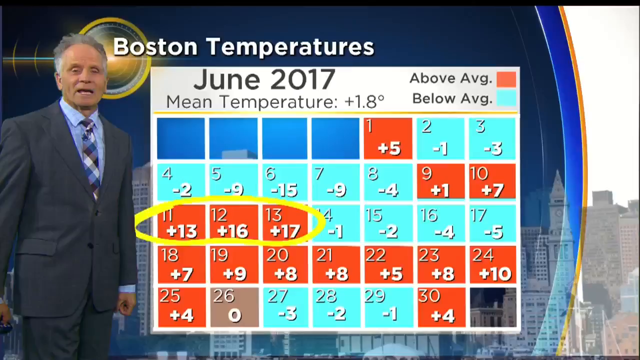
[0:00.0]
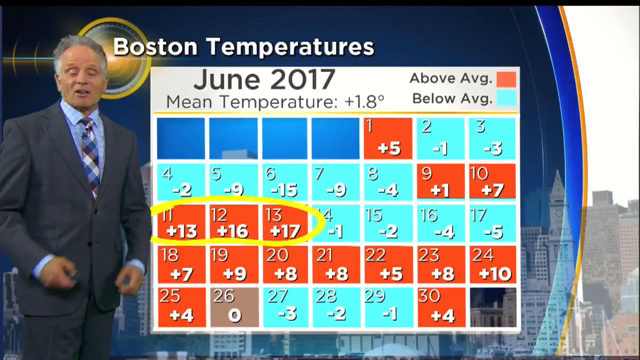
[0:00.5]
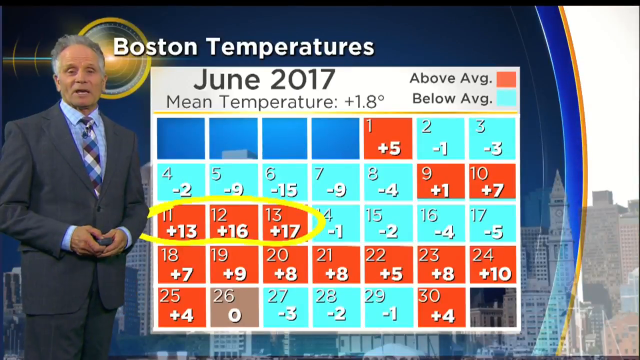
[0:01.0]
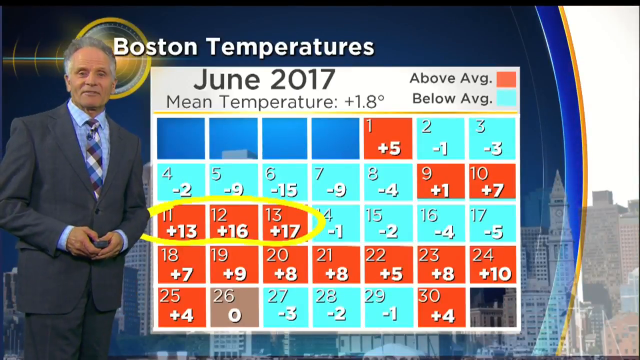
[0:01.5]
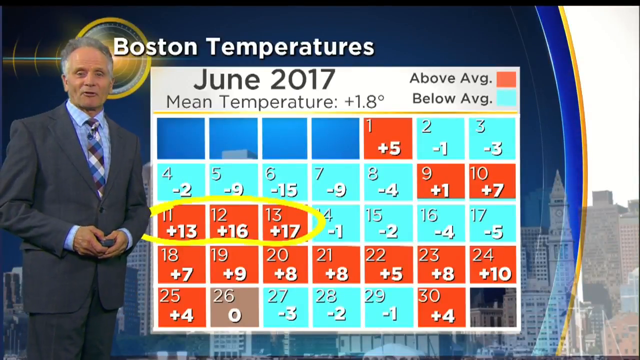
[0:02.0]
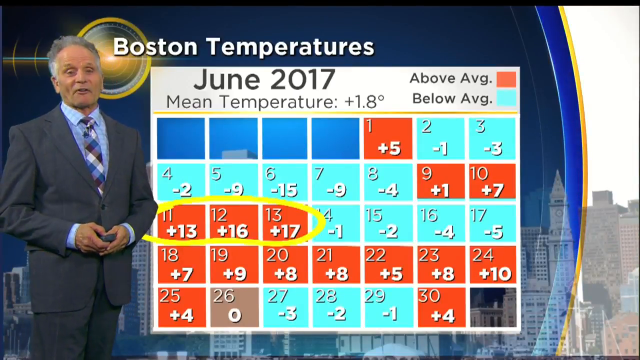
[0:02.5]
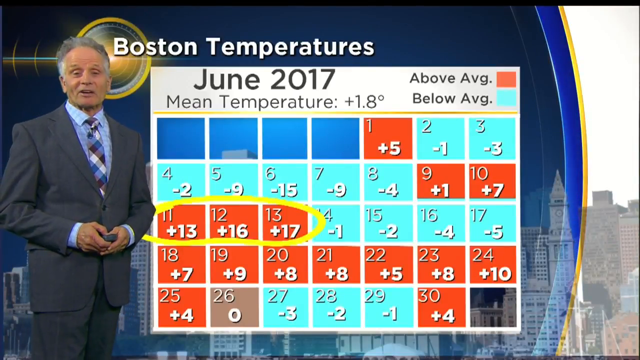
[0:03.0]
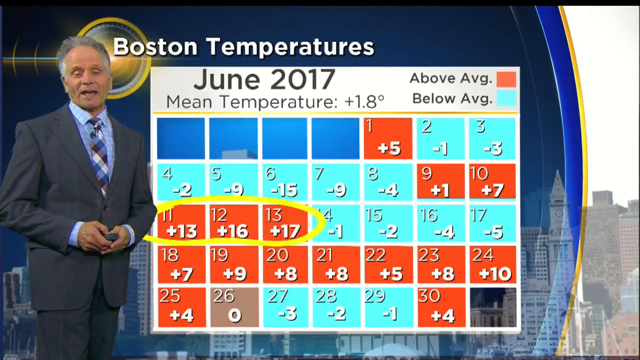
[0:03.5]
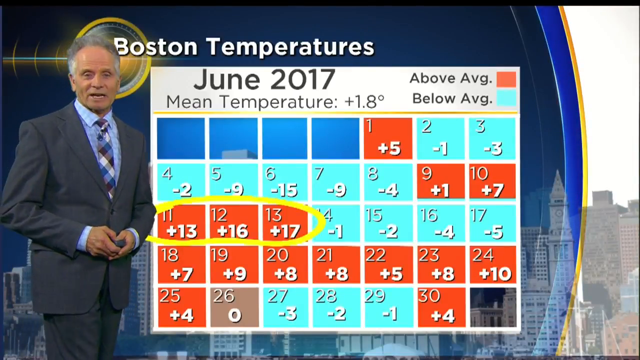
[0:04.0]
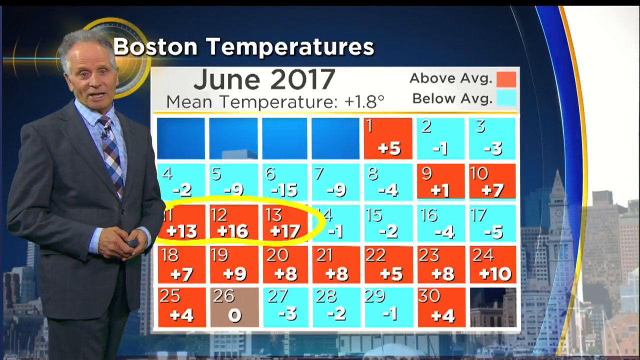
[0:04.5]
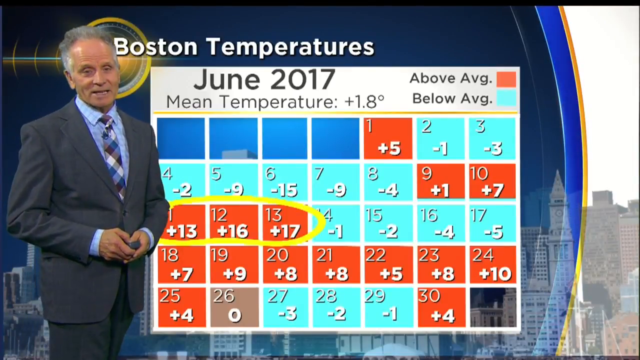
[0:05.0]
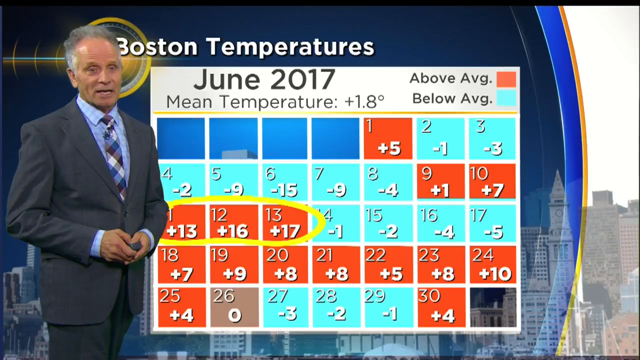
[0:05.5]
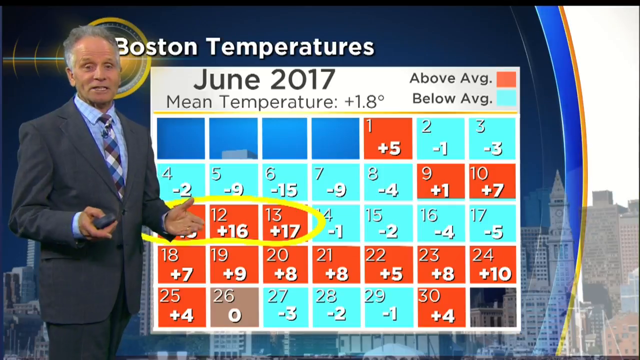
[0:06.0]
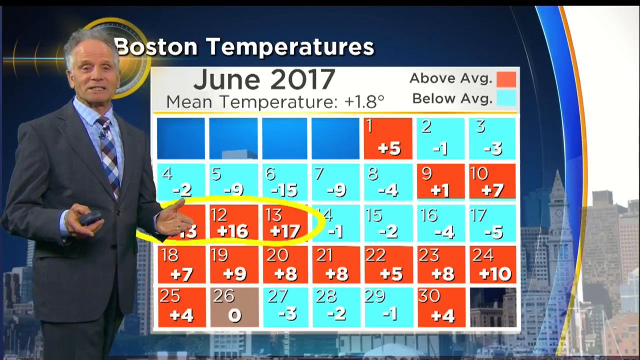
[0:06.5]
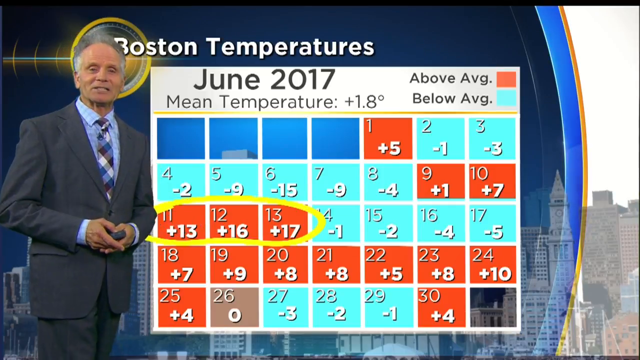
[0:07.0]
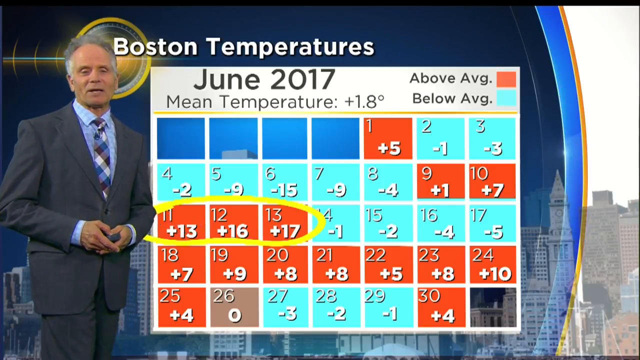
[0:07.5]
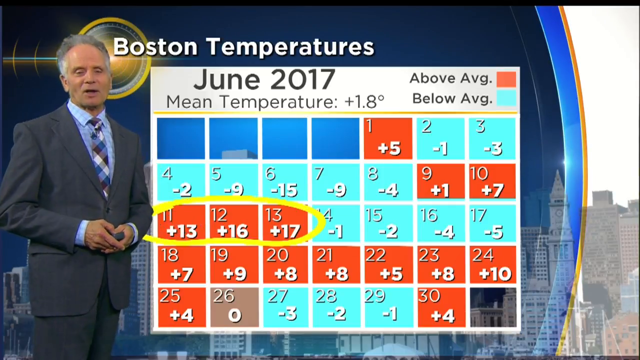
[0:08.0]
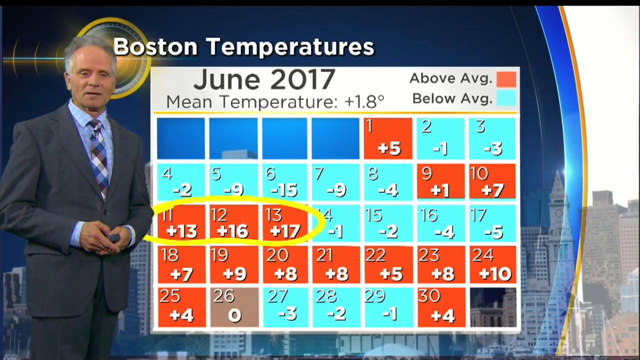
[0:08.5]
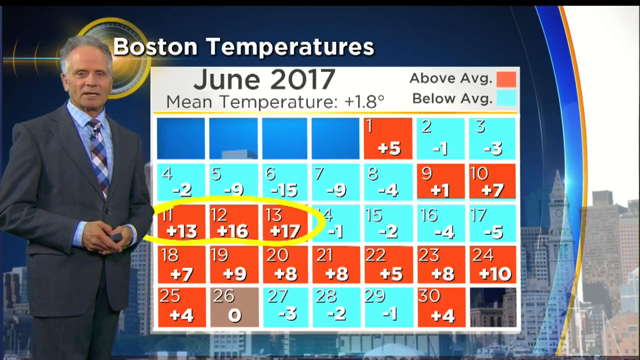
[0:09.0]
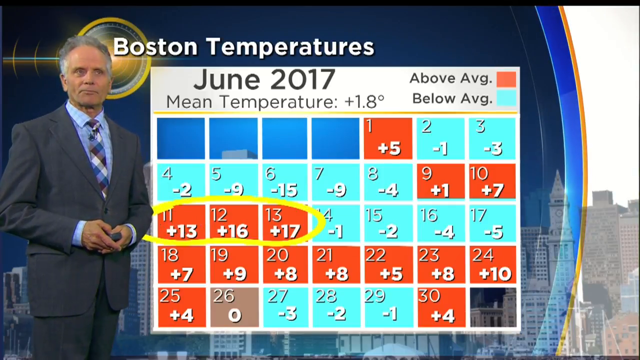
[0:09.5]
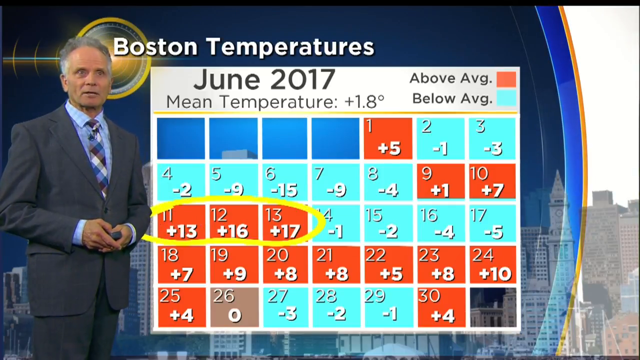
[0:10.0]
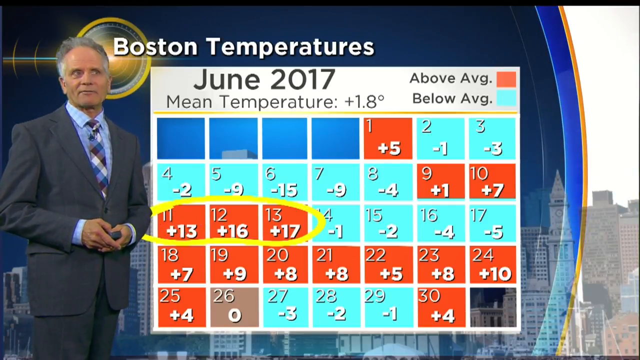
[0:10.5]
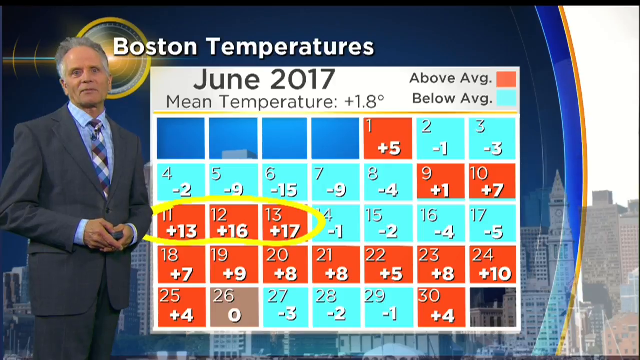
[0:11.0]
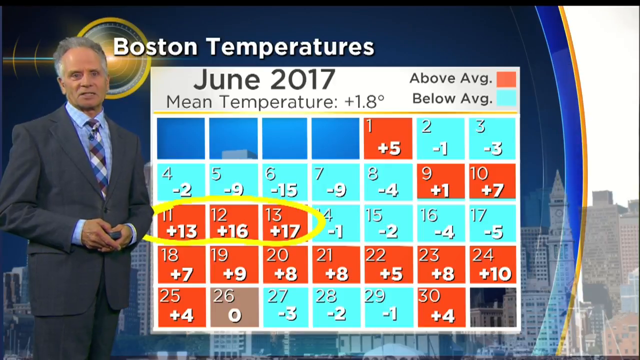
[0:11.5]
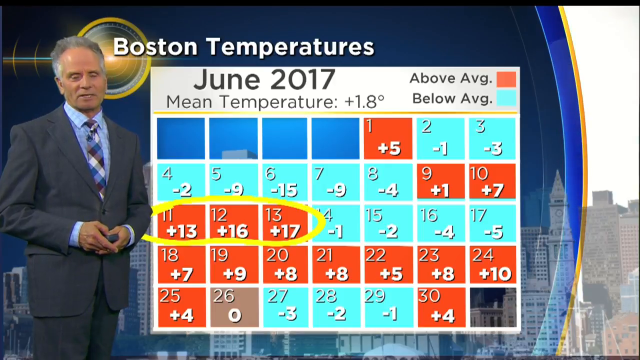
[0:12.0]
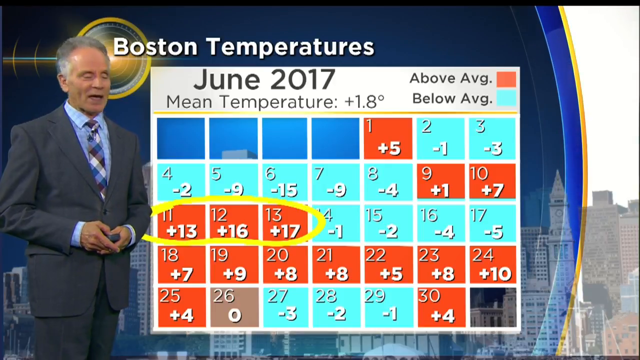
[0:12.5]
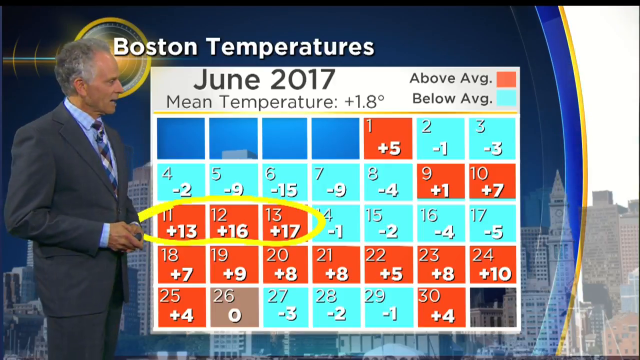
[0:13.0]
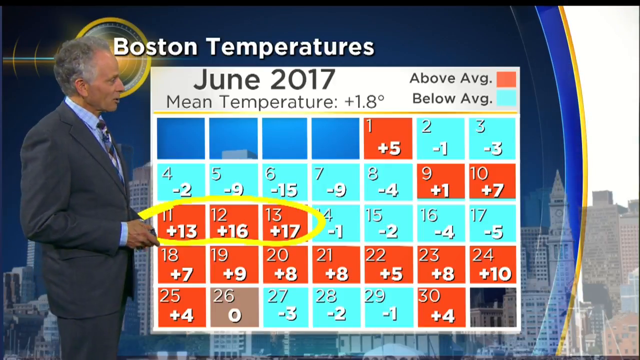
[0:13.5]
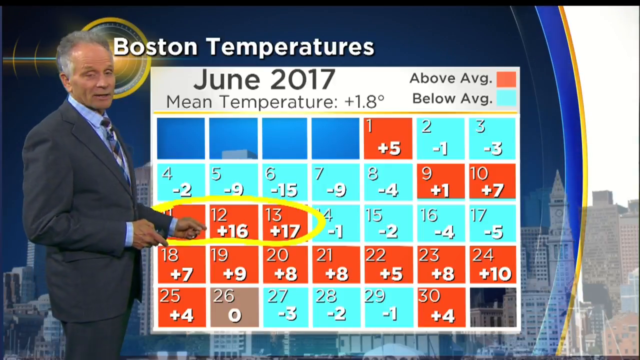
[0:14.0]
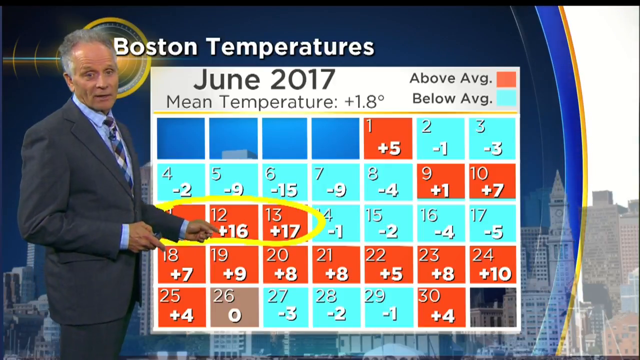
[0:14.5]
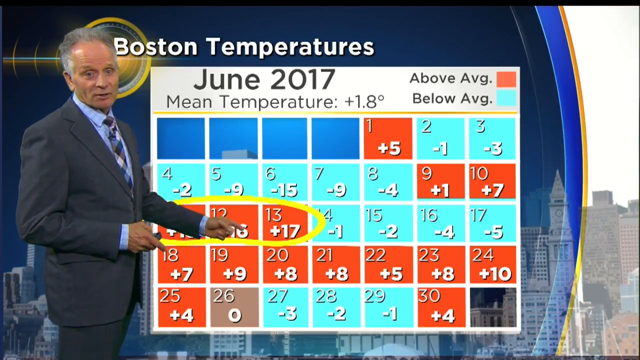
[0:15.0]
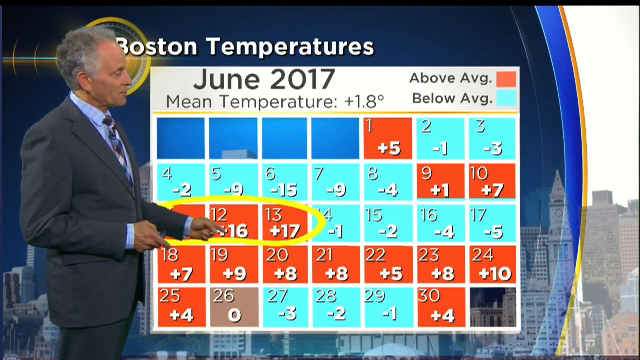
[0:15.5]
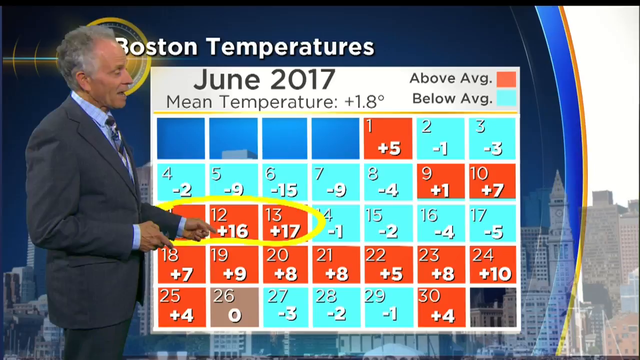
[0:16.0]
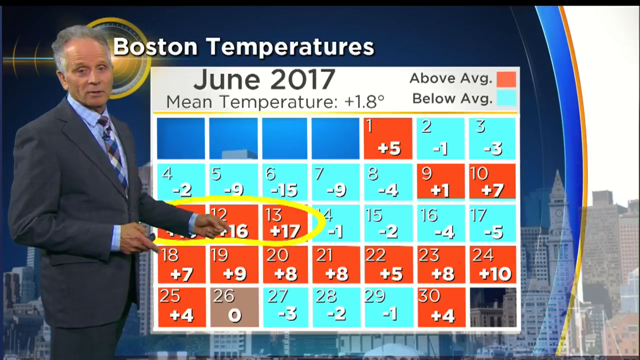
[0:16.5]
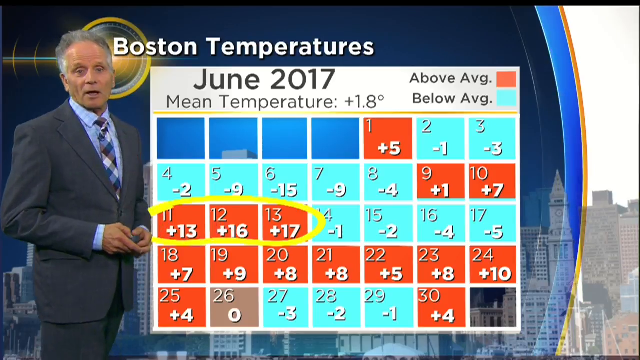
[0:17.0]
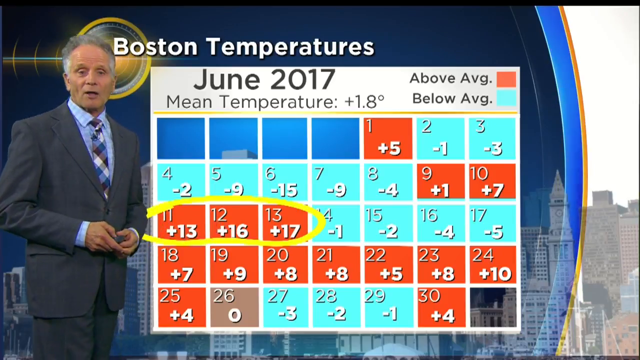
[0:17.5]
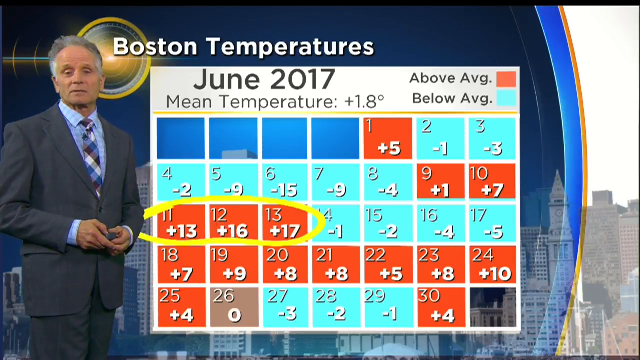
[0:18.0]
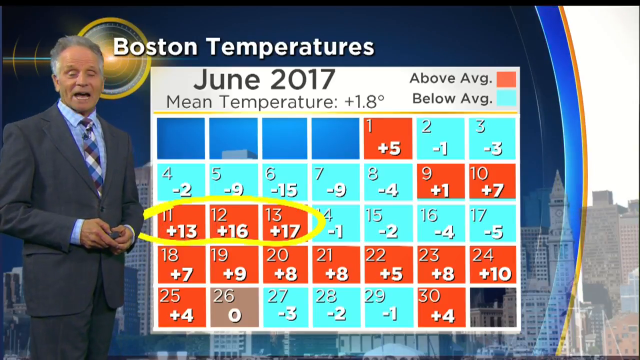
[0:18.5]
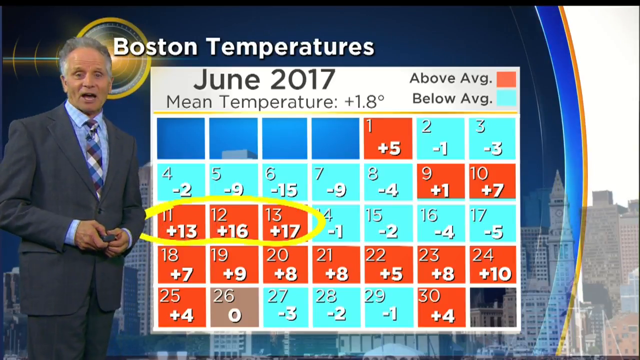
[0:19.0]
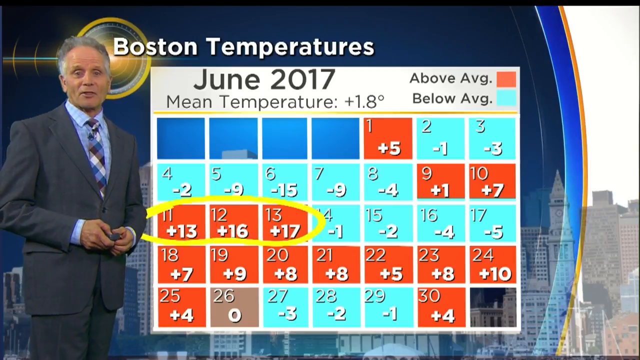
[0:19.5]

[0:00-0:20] What looks like a newscast weather forecast shows a calendar reading "June 2017" with the mean temperature for the month. The boxes are blue, teal and orange: orange is above average, teal is below average, and the other boxes are blue. Each box shows whether the temperature went up or down, with values like "plus 5" or "minus 1". The weather forecaster is to the left of the calendar. He is a white man with gray hair, wearing a gray suit, a checkered-looking tie and a light blue shirt. Behind him is some sort of round yellow disc. On the right side there is a blue and orange stripe, and a city is visible in the background. At the top, "Boston temperatures" appears in white.